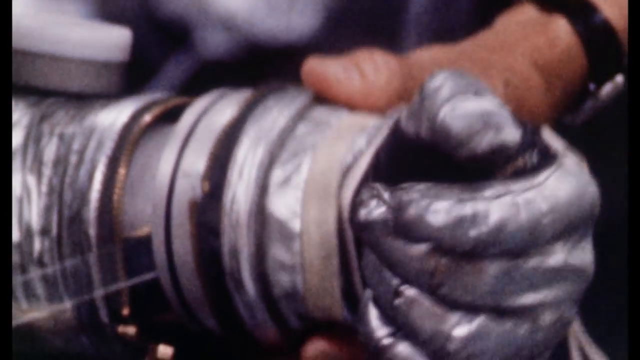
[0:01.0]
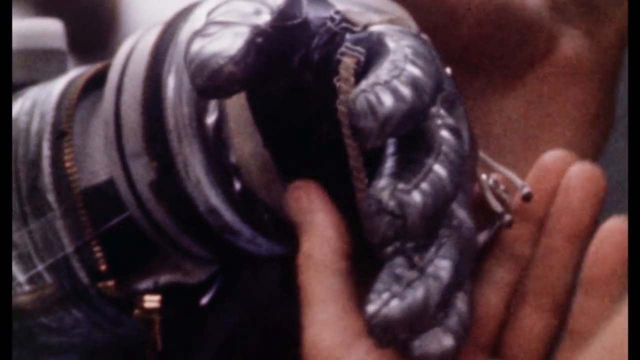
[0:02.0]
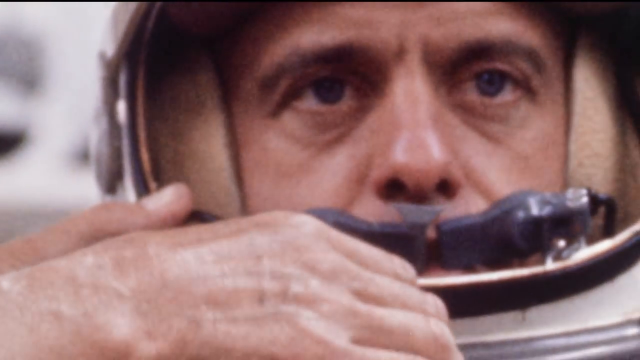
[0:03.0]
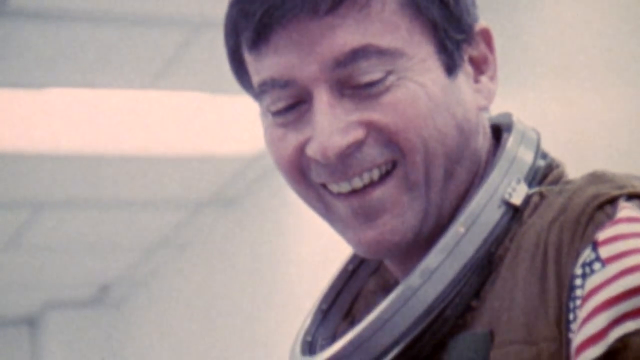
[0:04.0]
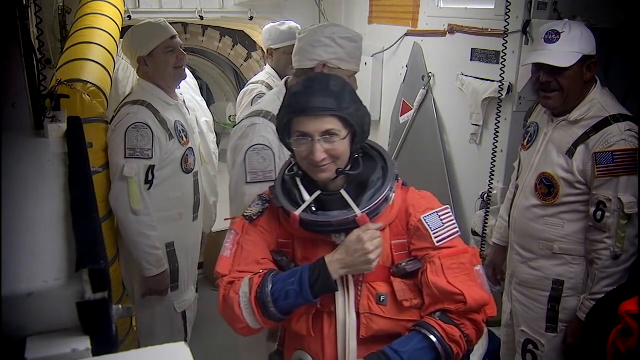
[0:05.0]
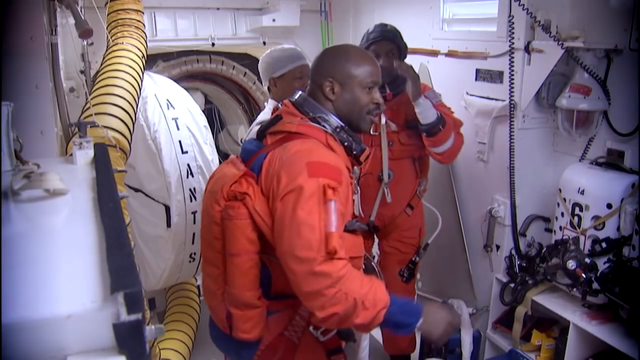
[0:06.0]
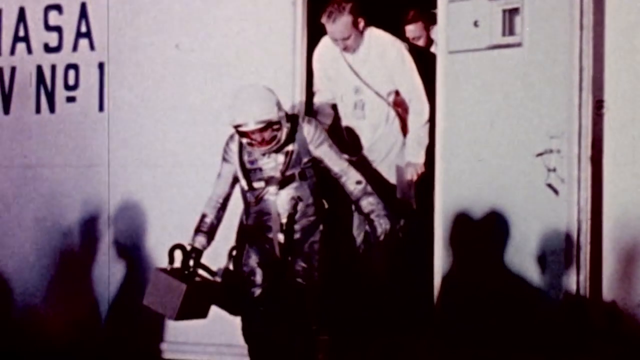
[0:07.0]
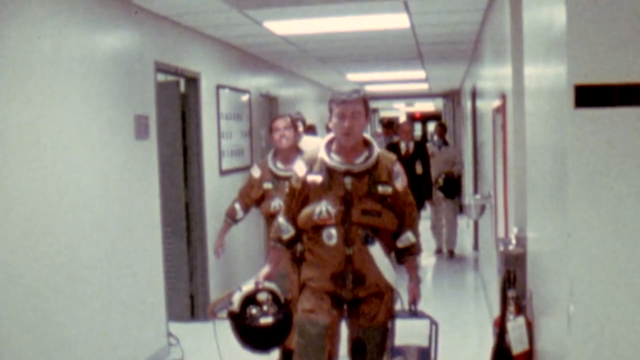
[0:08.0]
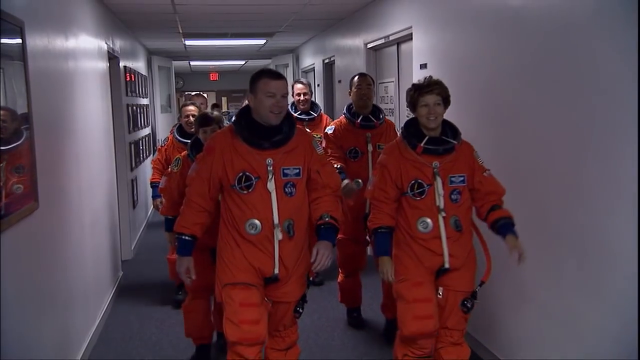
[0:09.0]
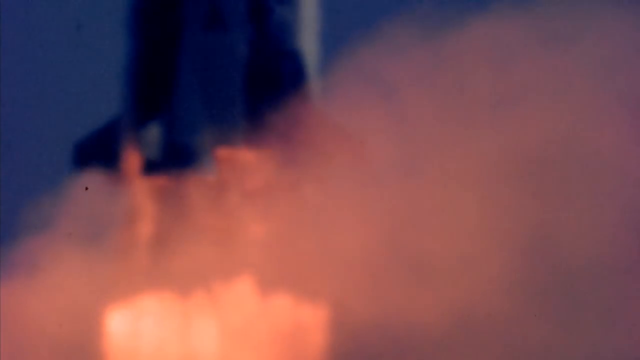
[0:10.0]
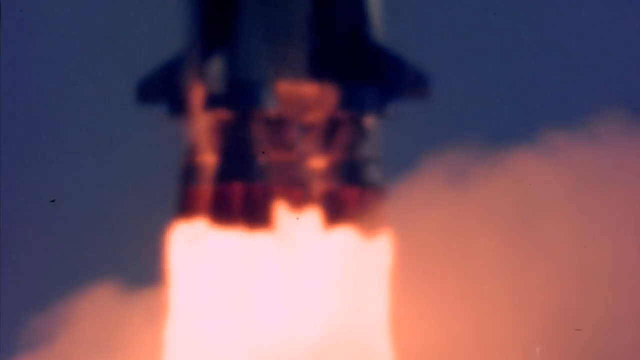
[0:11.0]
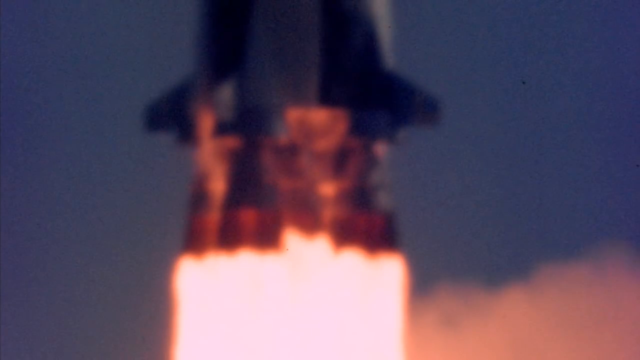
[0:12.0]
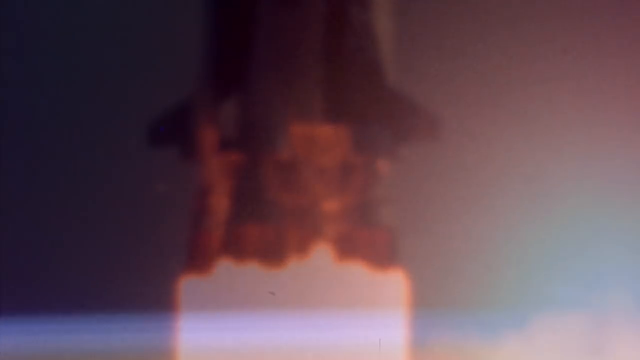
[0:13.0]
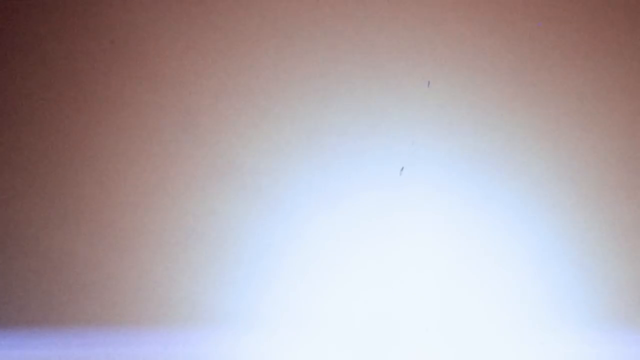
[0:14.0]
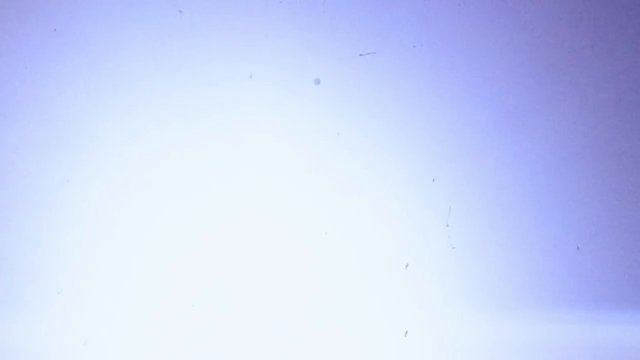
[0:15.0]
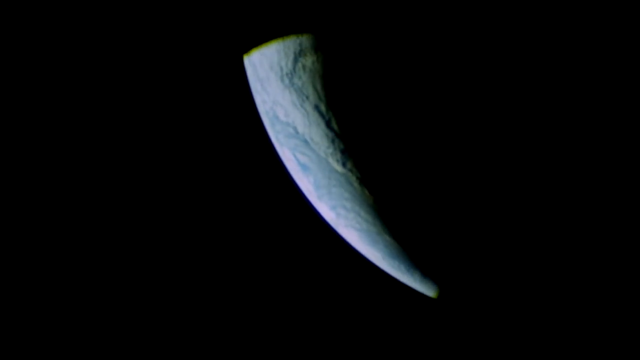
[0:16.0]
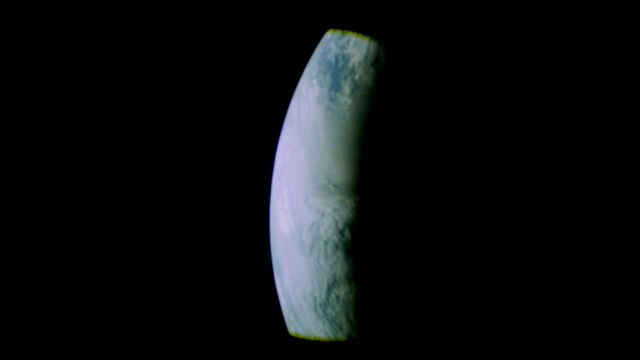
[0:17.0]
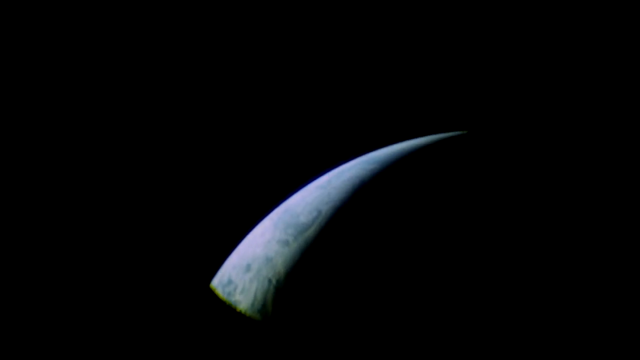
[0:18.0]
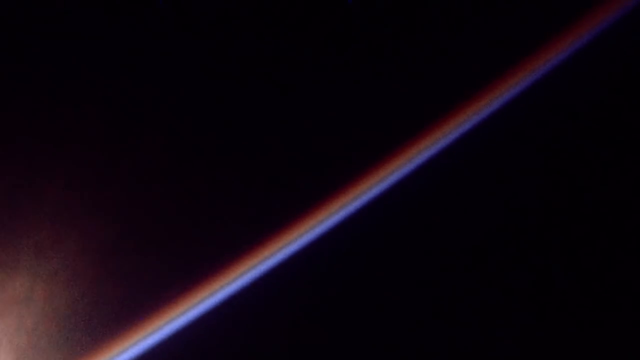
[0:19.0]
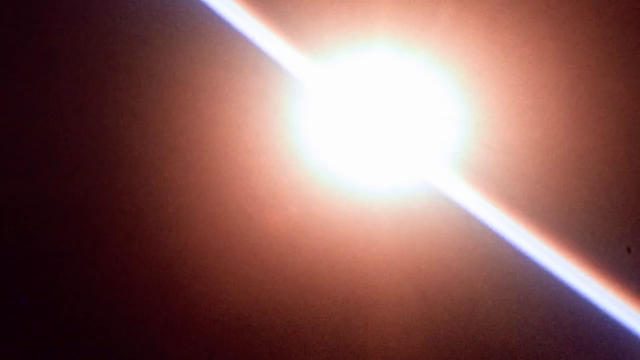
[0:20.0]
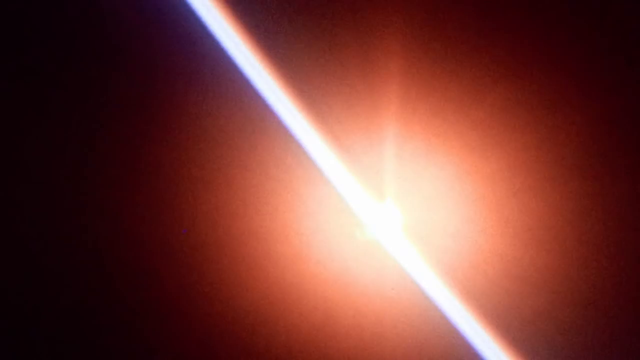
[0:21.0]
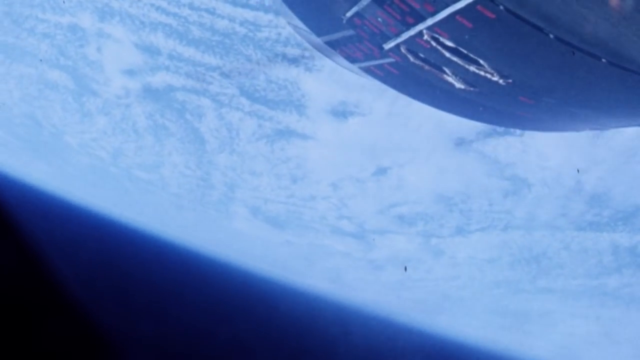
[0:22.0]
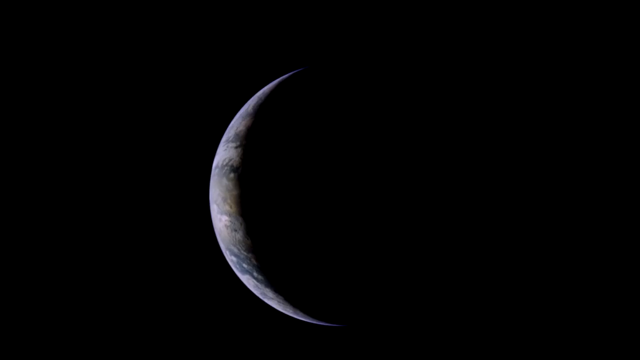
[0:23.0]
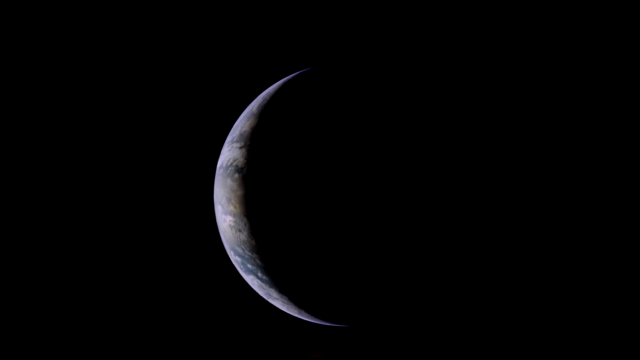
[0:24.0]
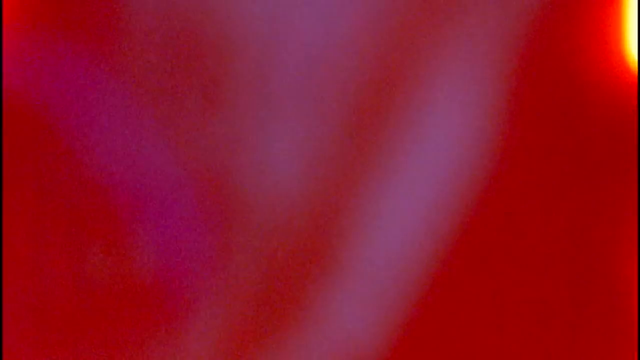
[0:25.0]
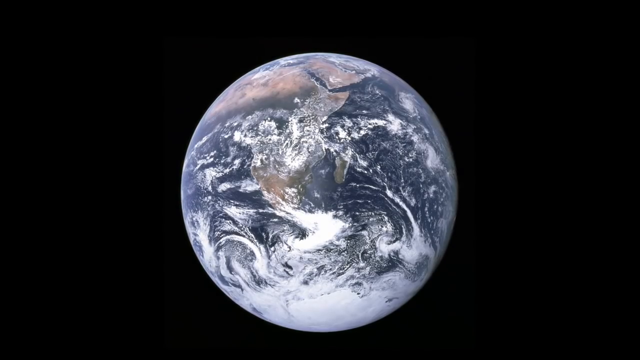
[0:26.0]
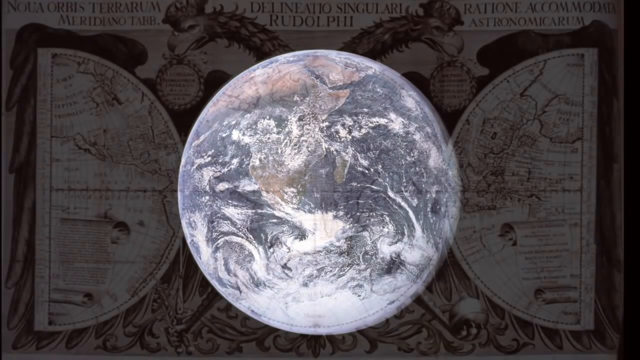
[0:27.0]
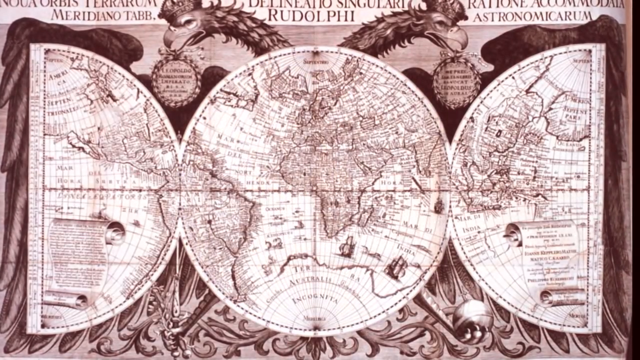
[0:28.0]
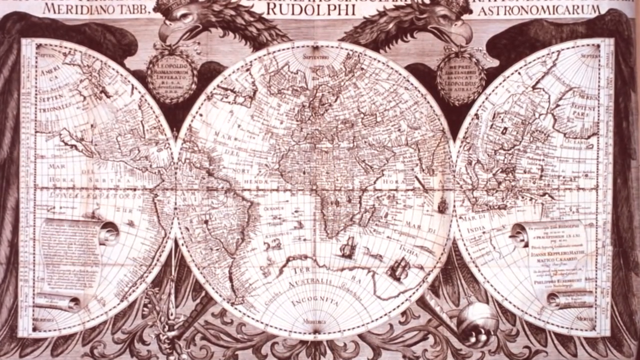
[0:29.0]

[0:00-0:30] Someone appears to be getting ready for space; these are astronauts. They put on gloves that are metallic. The footage looks like it might be from the 70s or 80s, so it is an older video. There is more than one astronaut: one has his helmet on, while another, without his helmet, looks toward the left side and smiles. He has short black hair, and an American flag is on his left shoulder, seen in a left-side profile view. The video then cuts to another clip, making it a compilation of clips, and these clips look newer. Some astronauts wear orange and some wear white. A rocket ship goes off, everything gets really bright, and then it goes black. A small crescent-shaped part of Earth appears with the rest of the frame black, seen from different angles, followed by a view of all of it. Then a map comes up that apparently is not in English; the words "Rudolph" and "delineatio" are on it. The map is so old that it is brown and white rather than black and white.